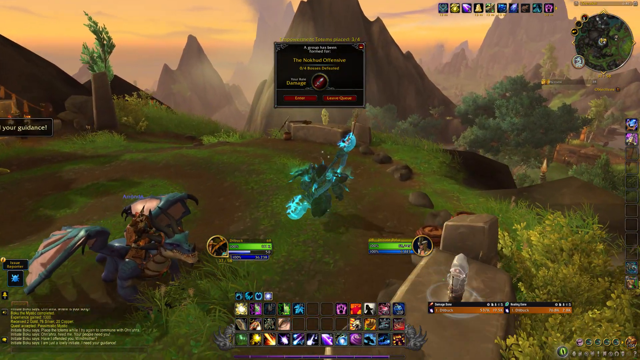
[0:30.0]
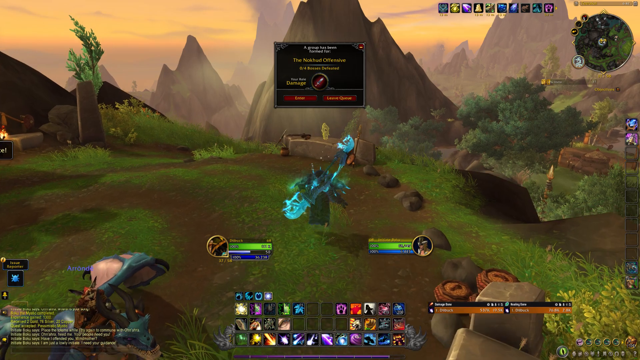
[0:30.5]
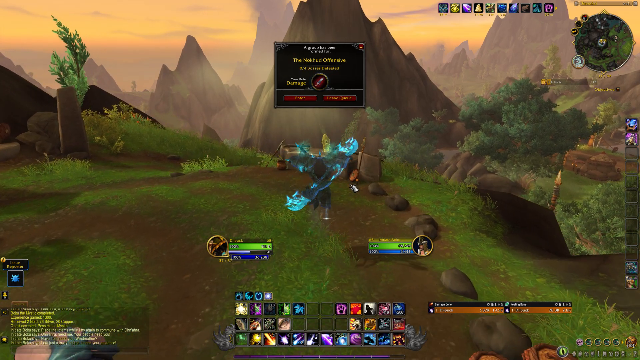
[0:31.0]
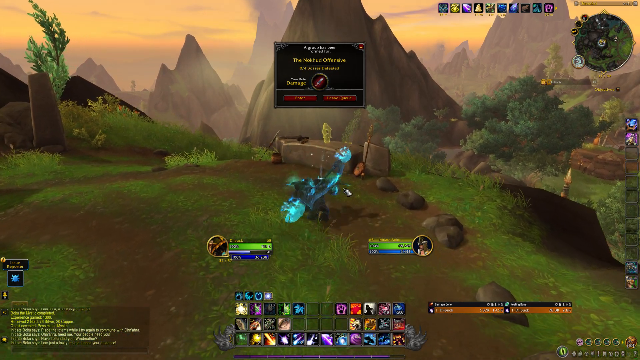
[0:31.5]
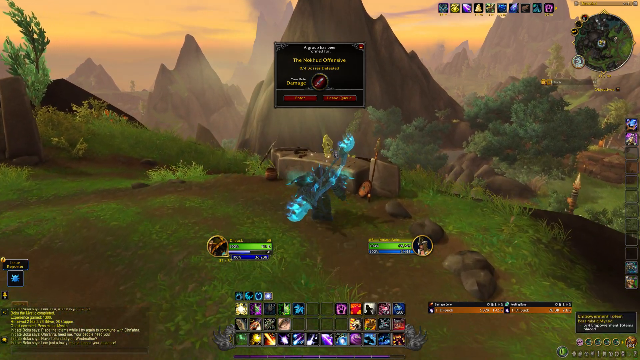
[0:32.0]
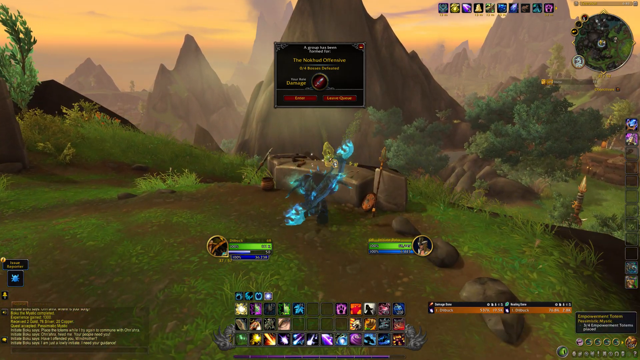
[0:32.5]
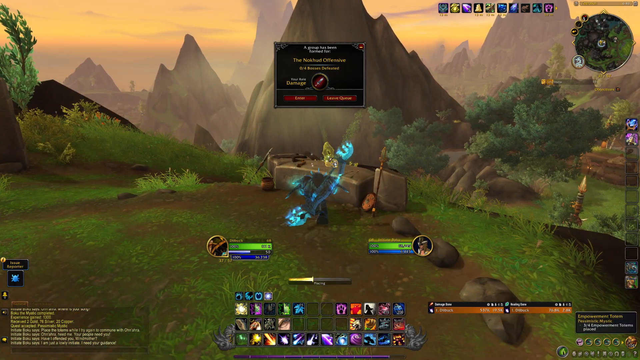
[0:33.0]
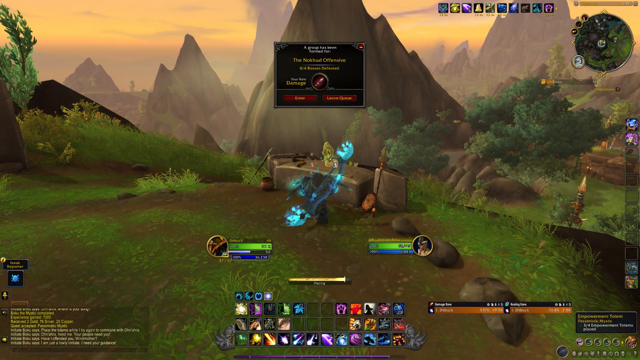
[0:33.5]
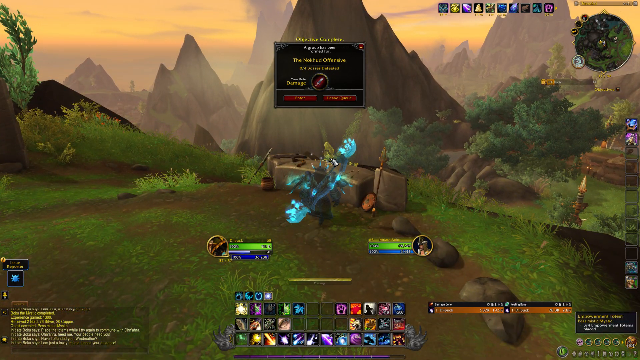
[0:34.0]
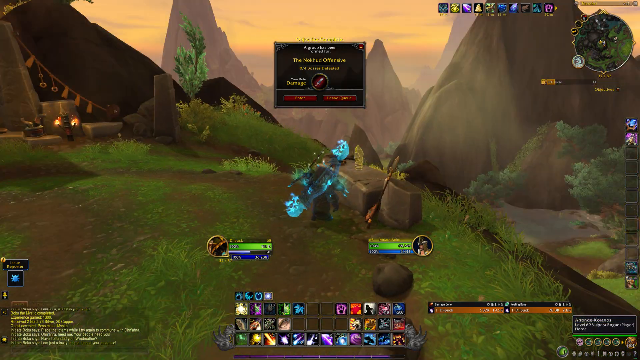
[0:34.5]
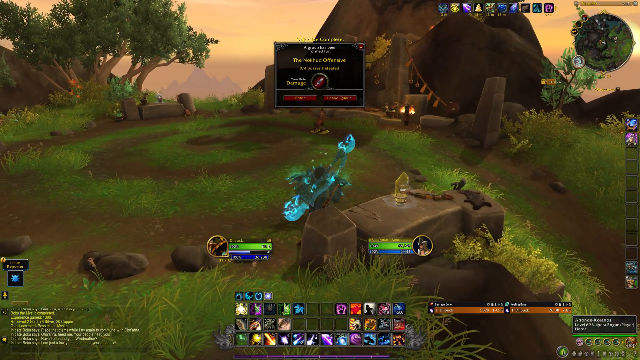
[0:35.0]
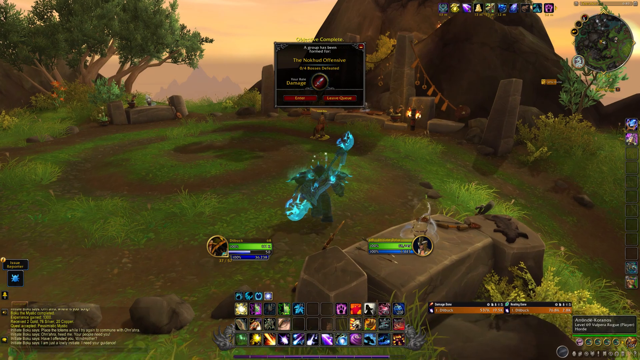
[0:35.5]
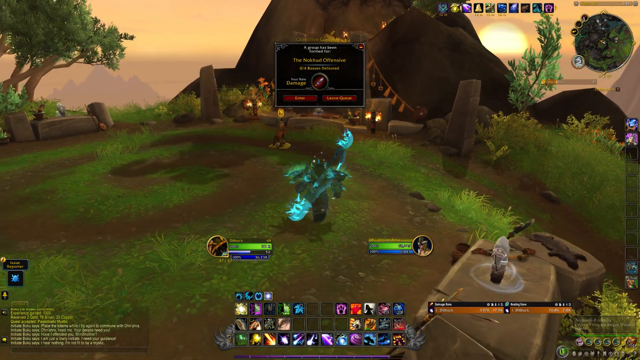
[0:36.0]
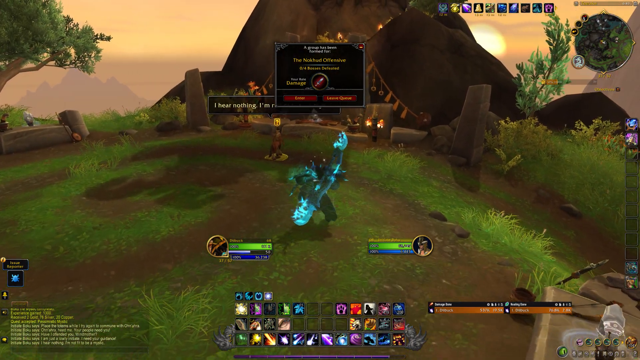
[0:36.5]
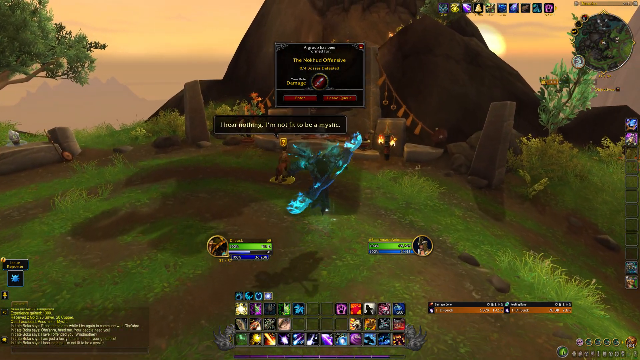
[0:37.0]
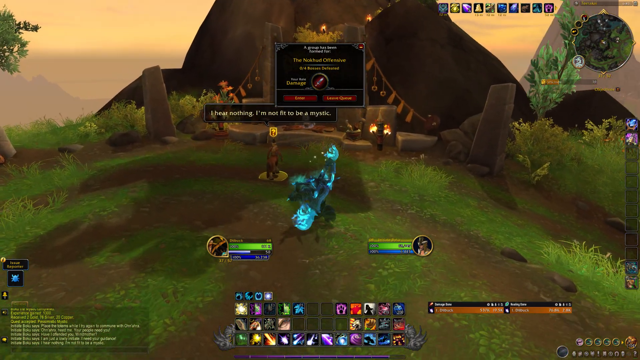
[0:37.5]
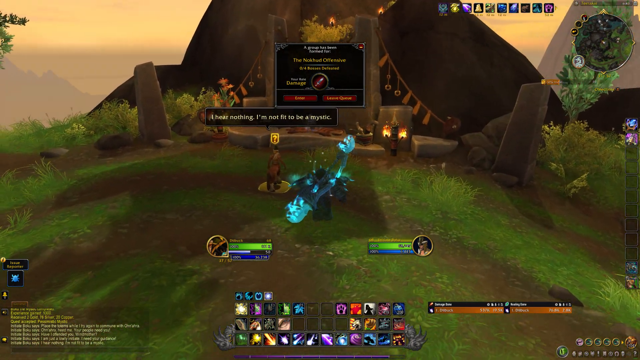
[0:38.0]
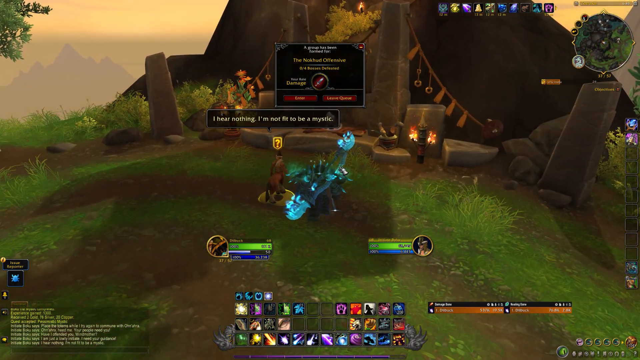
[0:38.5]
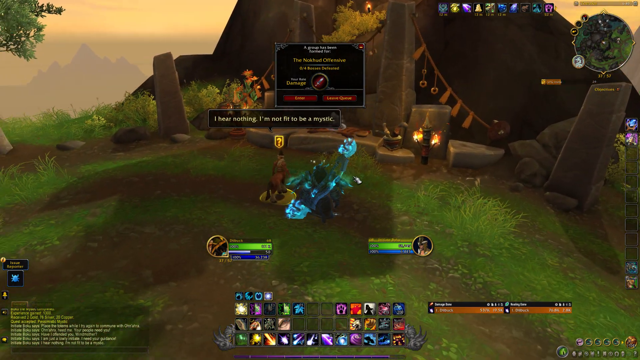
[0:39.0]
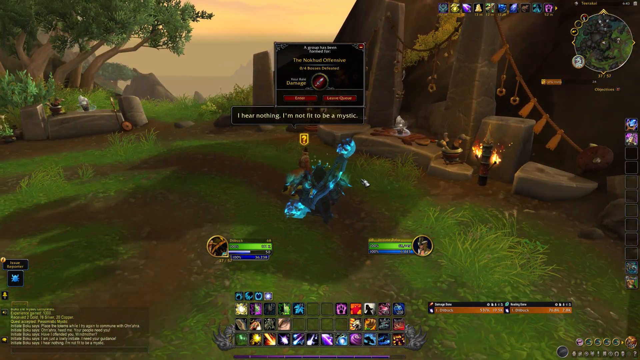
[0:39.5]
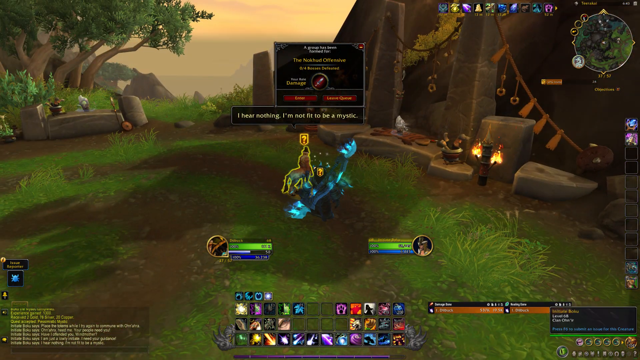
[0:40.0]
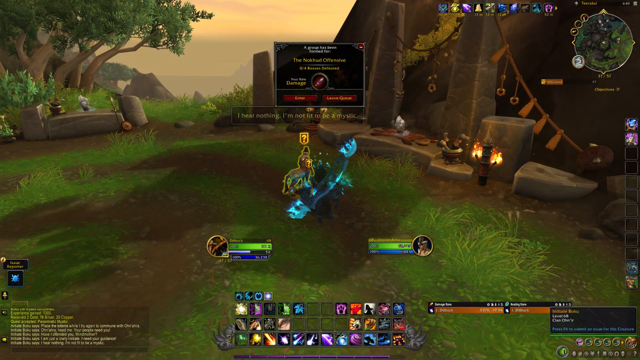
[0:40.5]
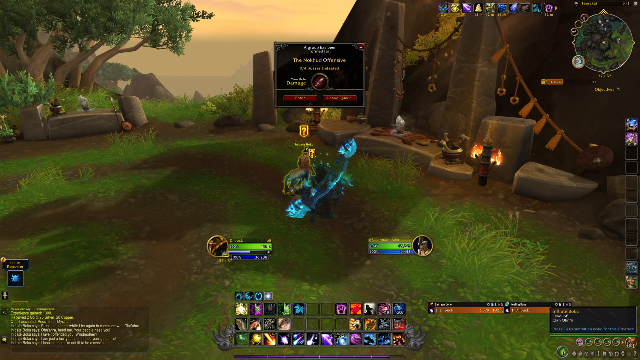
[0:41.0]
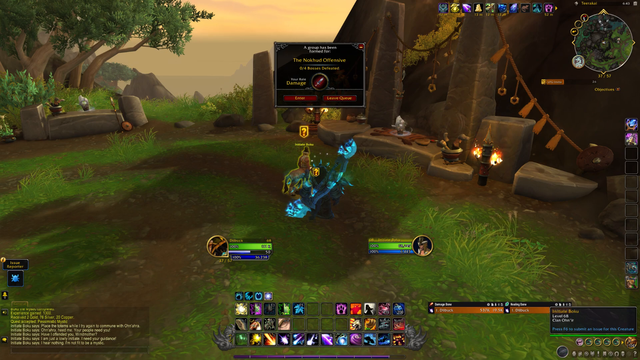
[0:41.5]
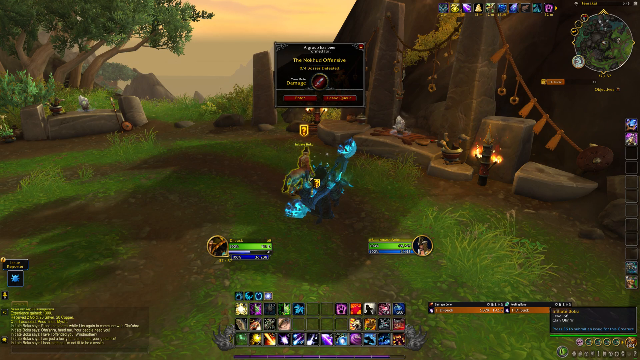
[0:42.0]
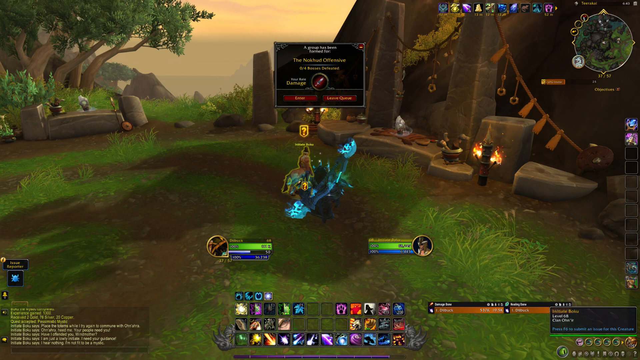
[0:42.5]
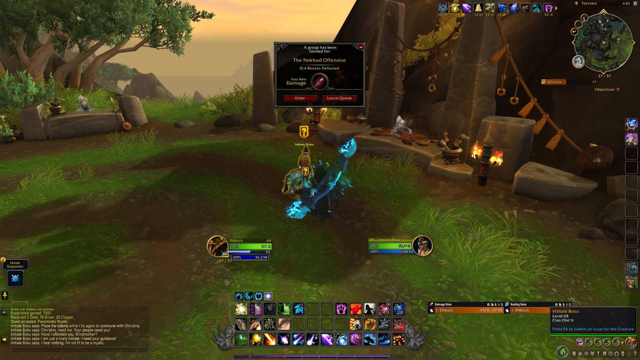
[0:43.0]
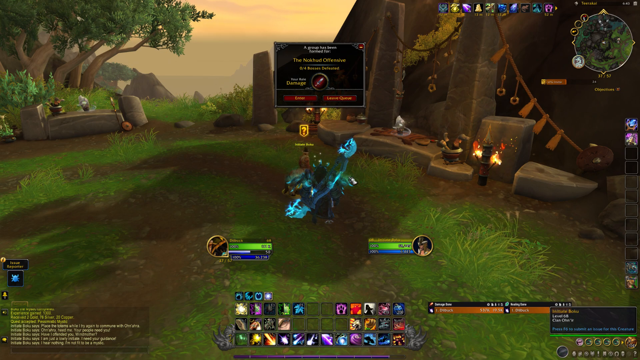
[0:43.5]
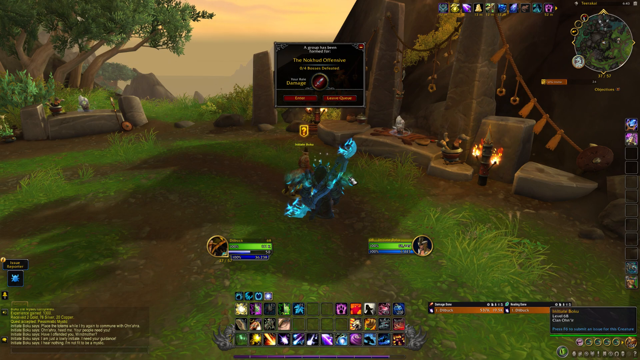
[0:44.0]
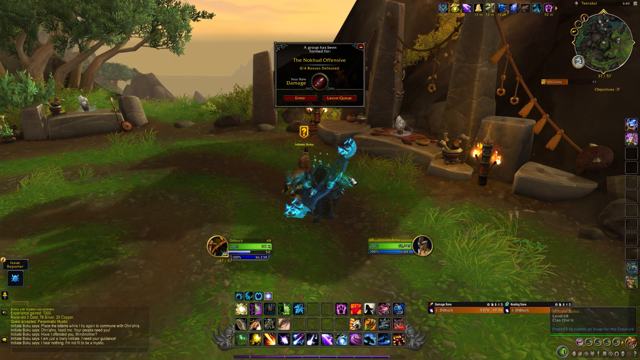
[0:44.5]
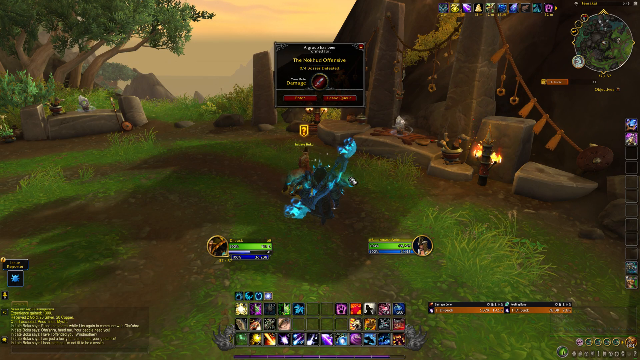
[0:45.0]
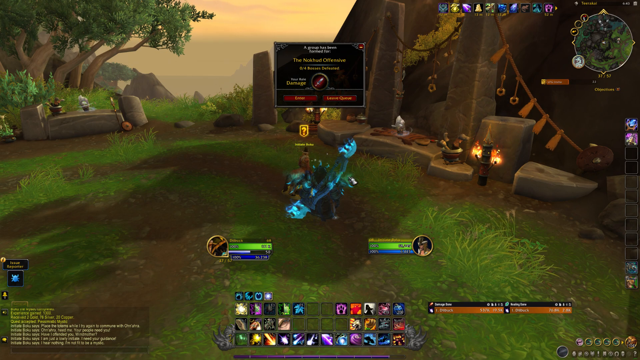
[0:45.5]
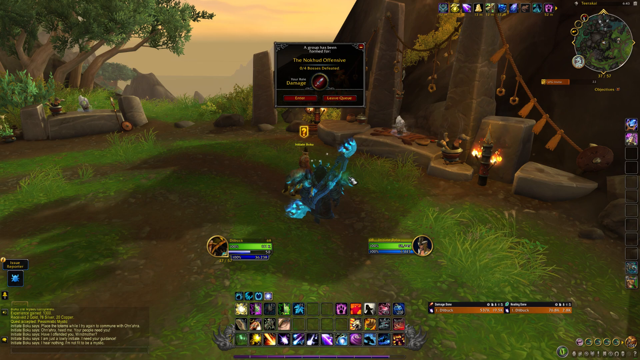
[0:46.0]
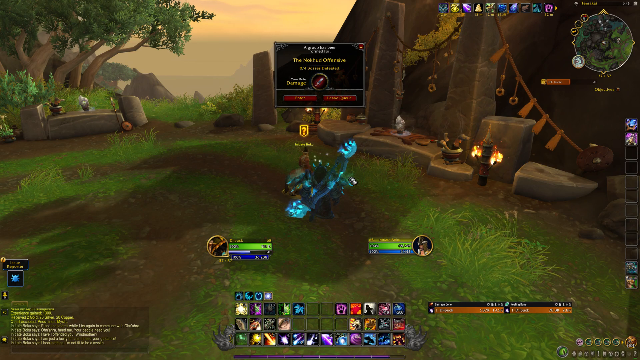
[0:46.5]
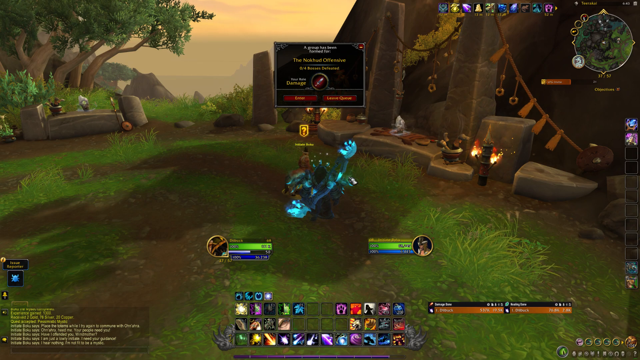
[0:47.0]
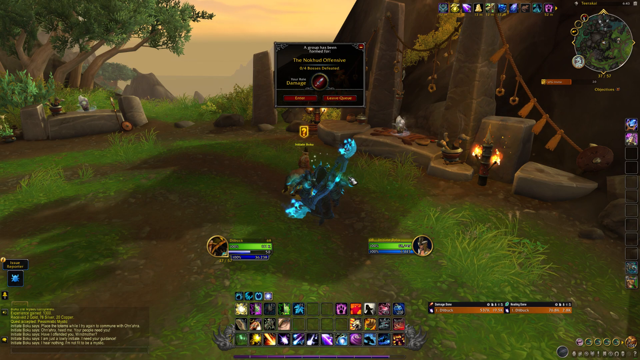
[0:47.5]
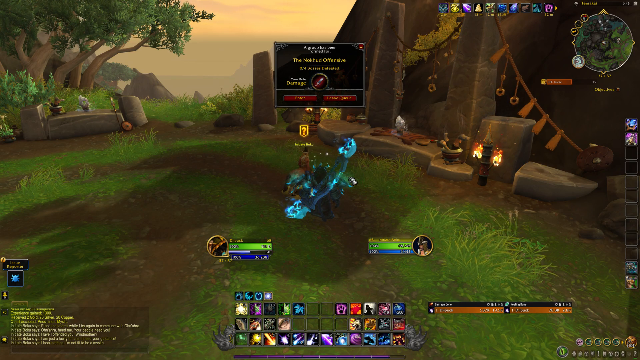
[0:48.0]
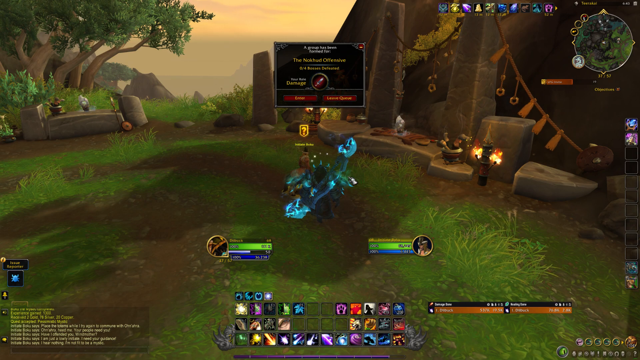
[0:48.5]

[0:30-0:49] The player continues moving towards the other altar, jumping at one point, and reaches it. The bar at the bottom fills up as though the player is either putting something down or picking something up. Once the bar is filled, the dragon demon thing flies away and the player returns to the centaur. Text above the centaur, presumably what the centaur is saying, reads "I hear nothing I'm not fit to be a mystic", along with a gold question mark. When the cursor hovers over the centaur, the centaur is highlighted in yellow. The cursor then moves in a circular motion, as though whoever is playing is indicating that something needs to be done with the centaur. The cursor moves off the centaur, and the player stays in place without moving or doing anything, apparently because the cursor has not been clicked. At the bottom are kind of icons in green and blue; it is unclear whether they relate to the player or the centaur. Over the ruins there appears to be an altar with some flames and some kind of decorative shamanistic things.